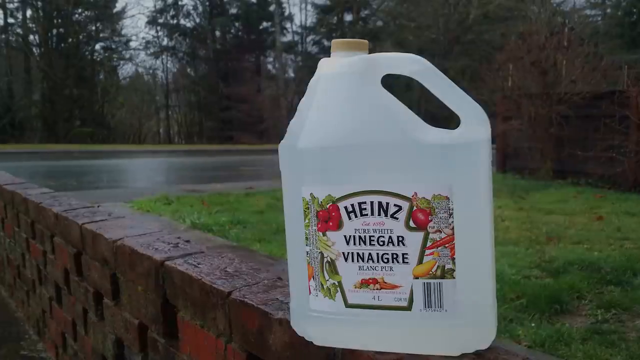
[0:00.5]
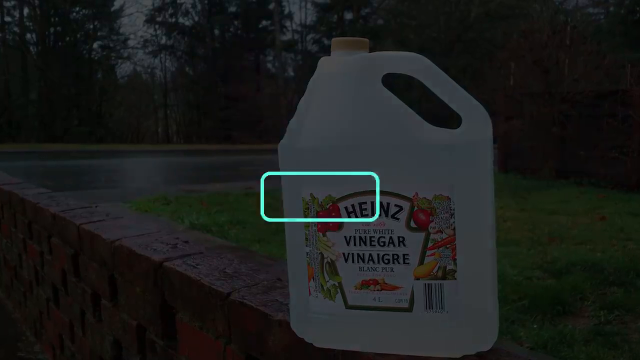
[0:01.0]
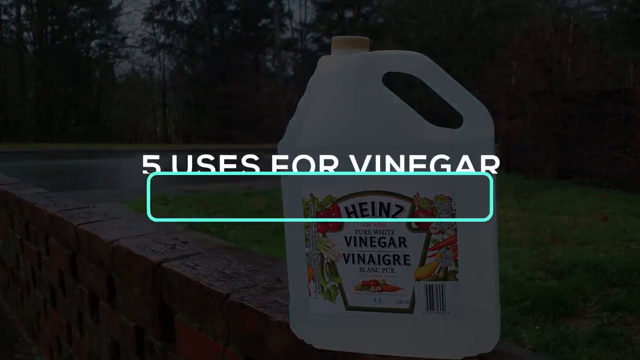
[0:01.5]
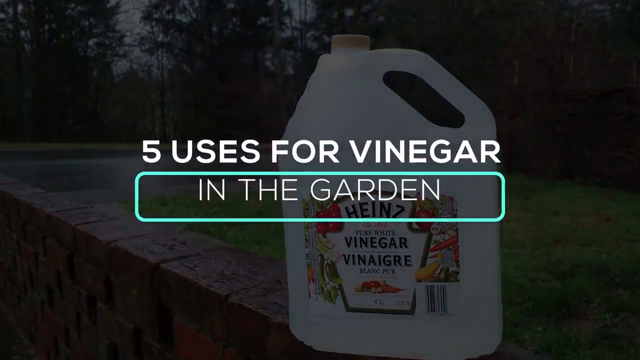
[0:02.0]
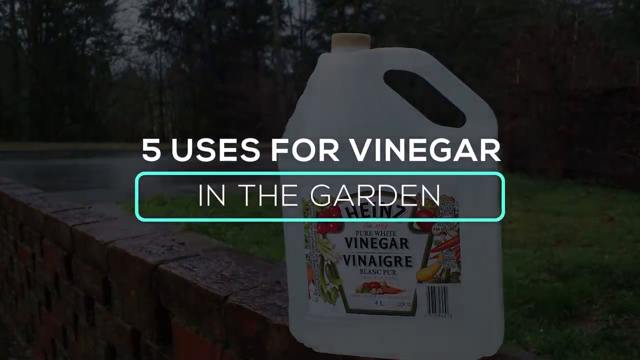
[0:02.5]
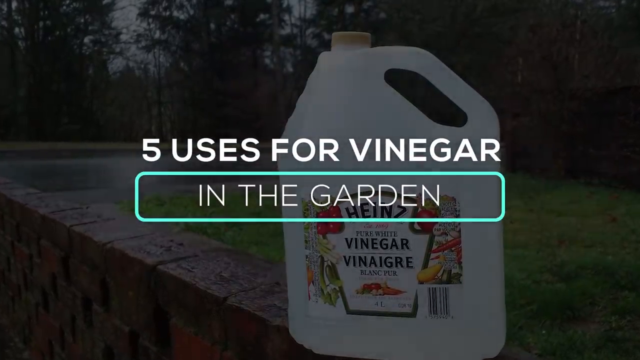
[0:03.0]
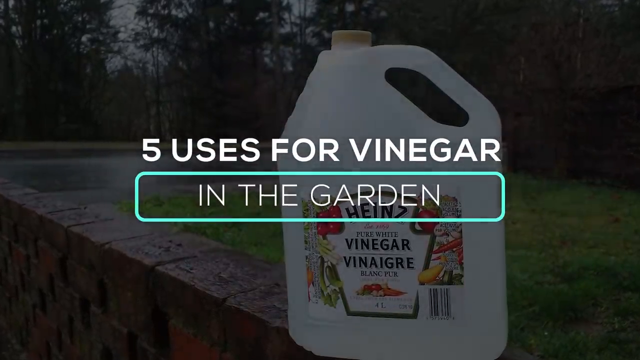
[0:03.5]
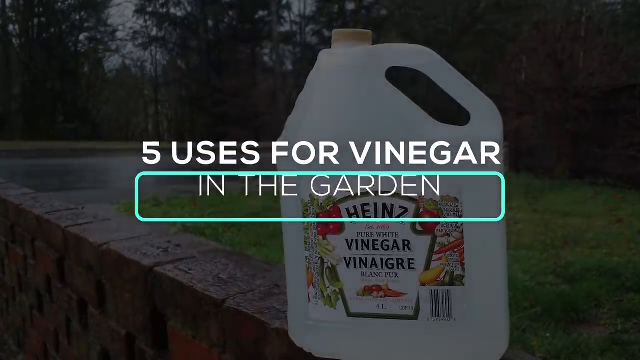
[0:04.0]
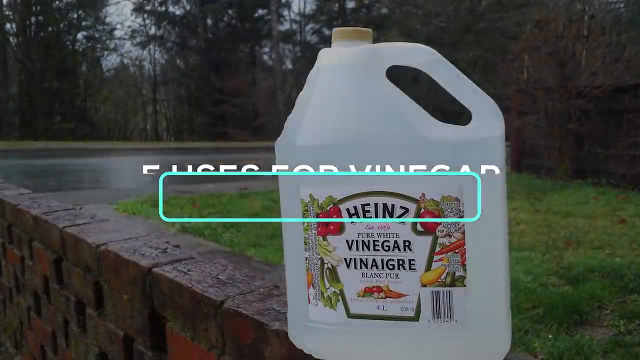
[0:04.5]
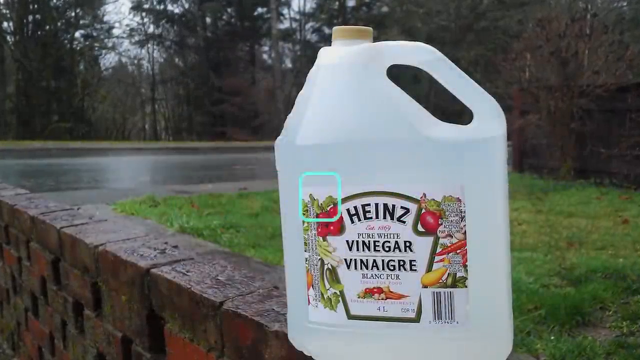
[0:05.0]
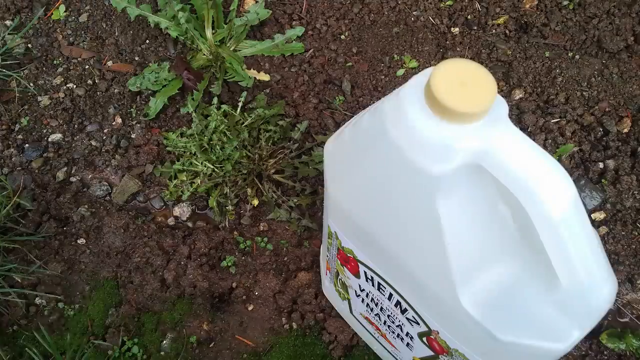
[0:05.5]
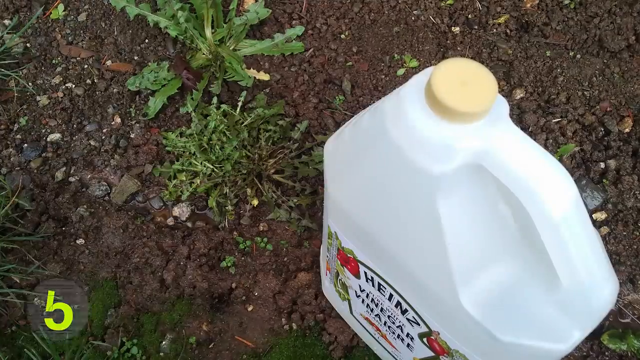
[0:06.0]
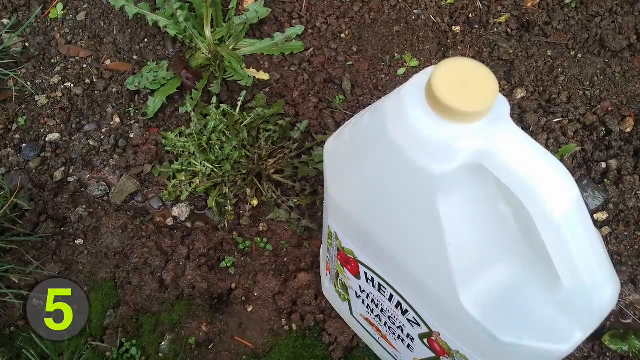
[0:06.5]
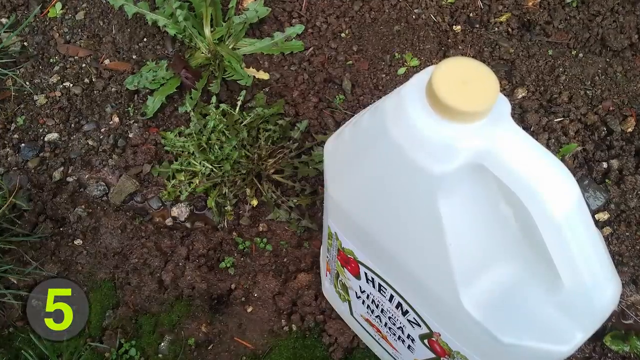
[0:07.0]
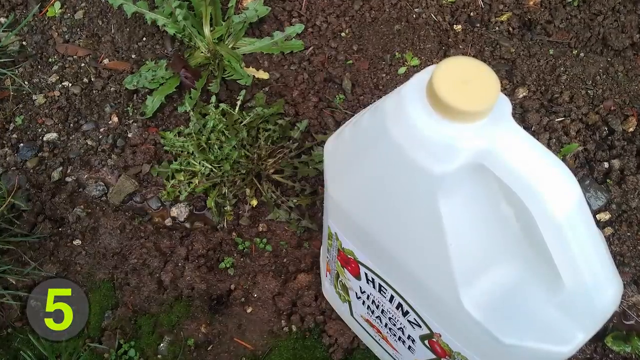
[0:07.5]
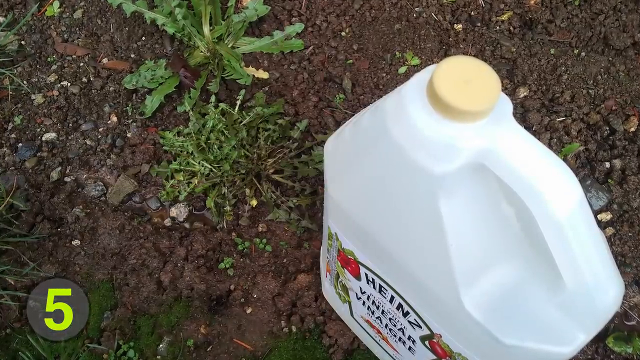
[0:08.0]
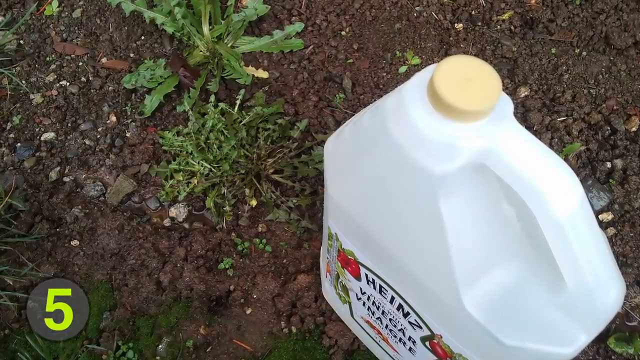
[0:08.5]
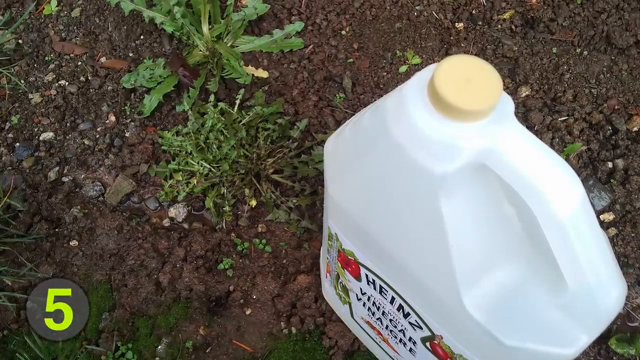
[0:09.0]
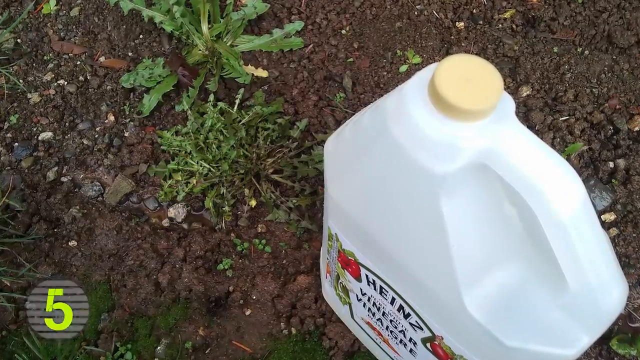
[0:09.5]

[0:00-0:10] A large four-liter Heinz vinegar bottle is shown, with large white text stating five uses for vinegar. The bottle bears a tomato and numerous vegetables. In the first image, the bottle is on top of a brick wall, with green grass behind the wall and green trees behind that. The video then cuts to another image in which the bottle is on the ground, on brown dirt with numerous weeds around it. The cap looks to be a vanilla color. There is a barcode on the front of the bottle's cover, and "Heinz" and "vinegar" are written in black text.